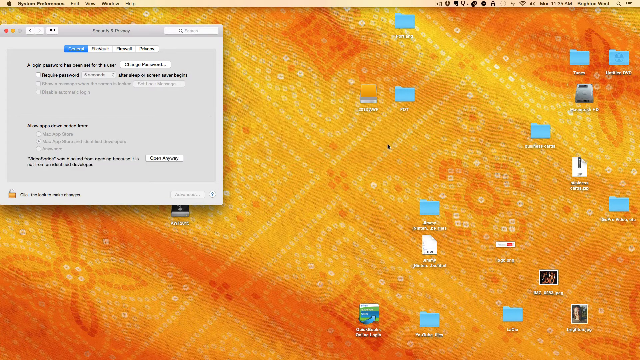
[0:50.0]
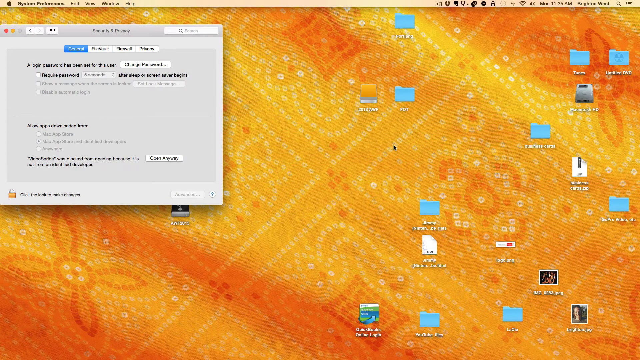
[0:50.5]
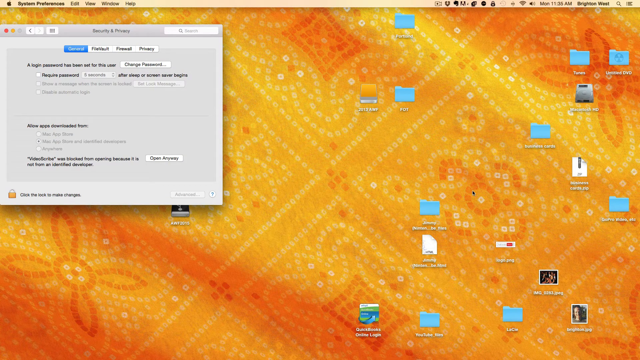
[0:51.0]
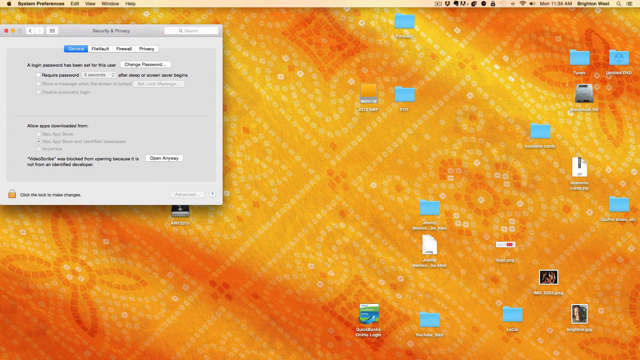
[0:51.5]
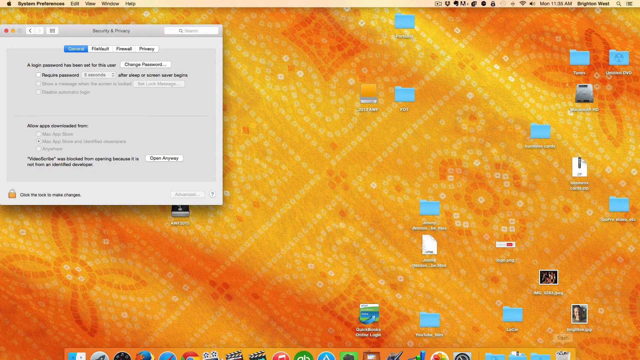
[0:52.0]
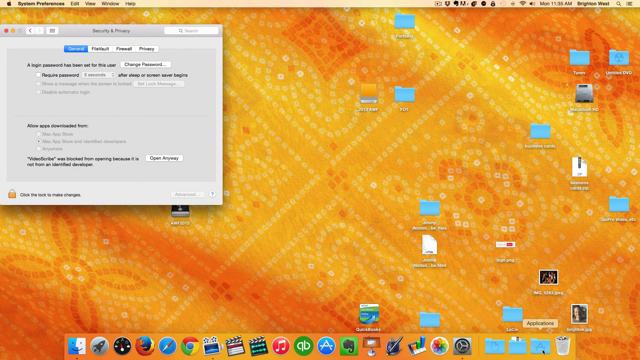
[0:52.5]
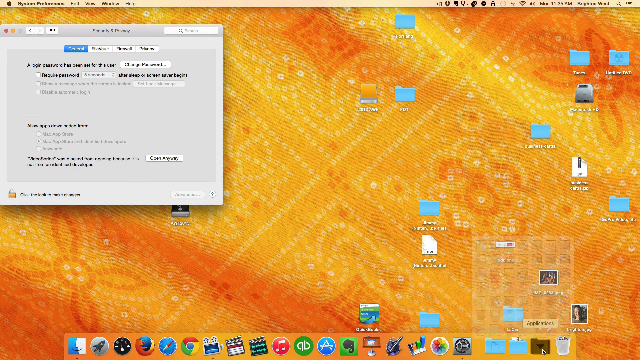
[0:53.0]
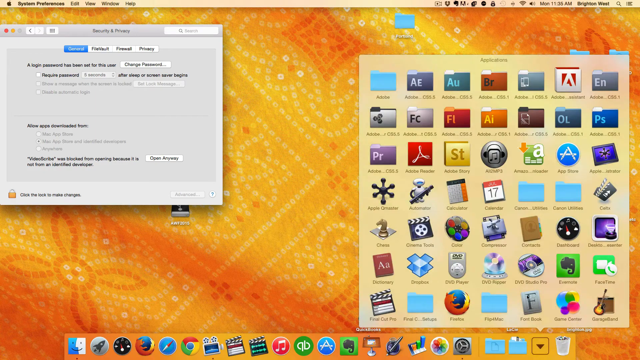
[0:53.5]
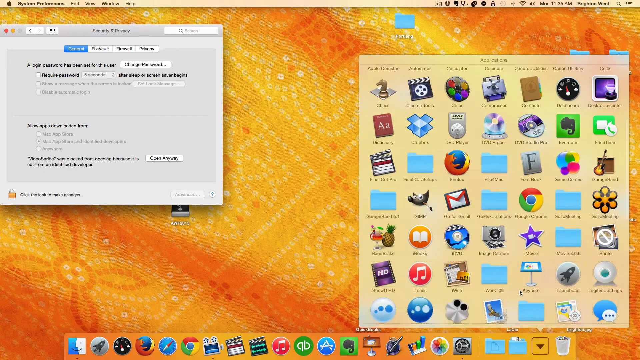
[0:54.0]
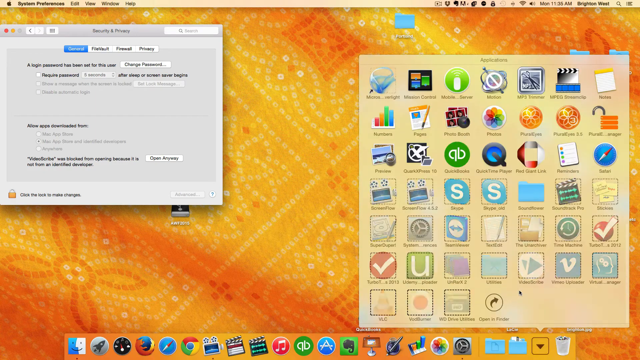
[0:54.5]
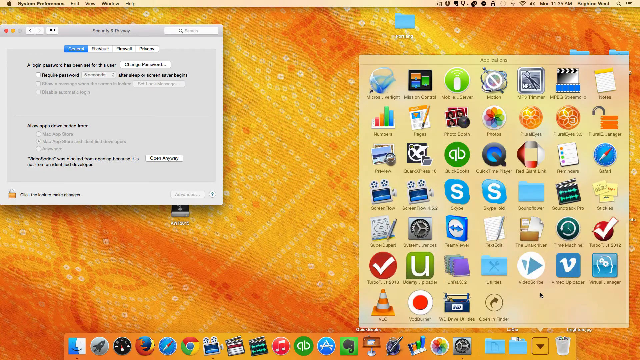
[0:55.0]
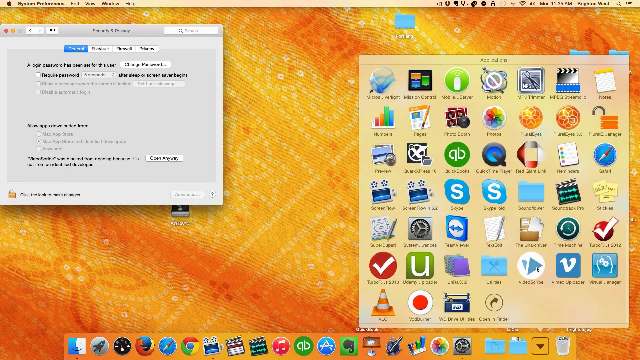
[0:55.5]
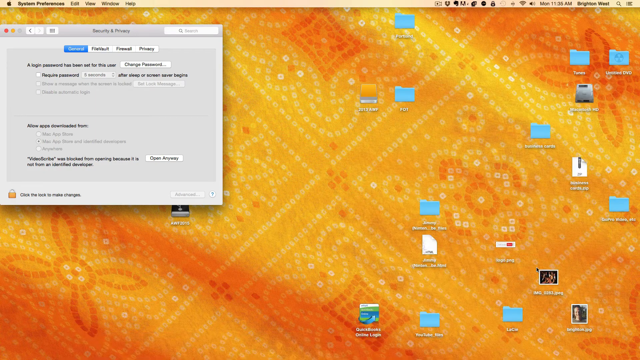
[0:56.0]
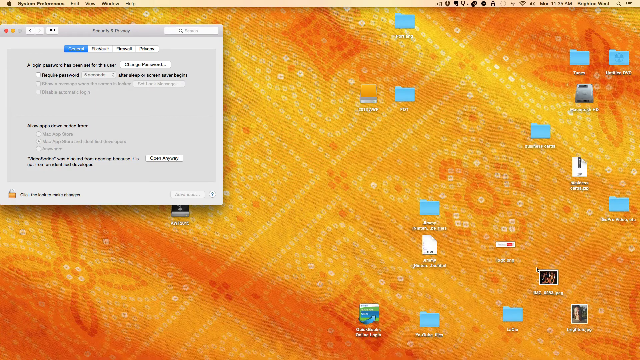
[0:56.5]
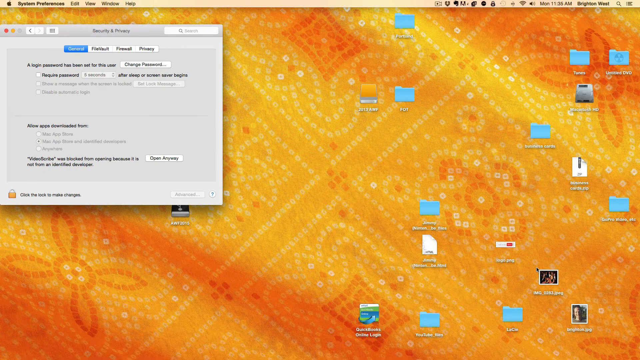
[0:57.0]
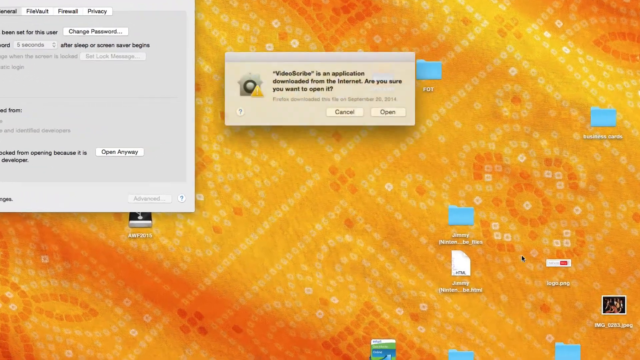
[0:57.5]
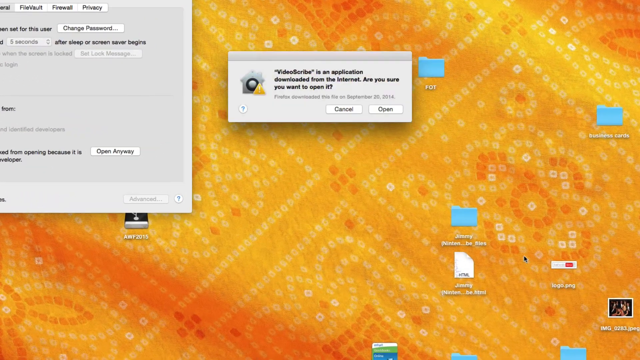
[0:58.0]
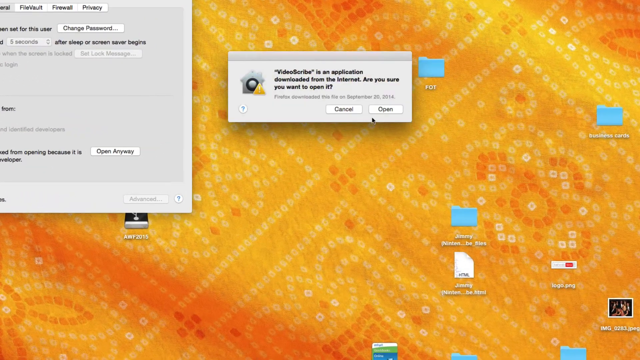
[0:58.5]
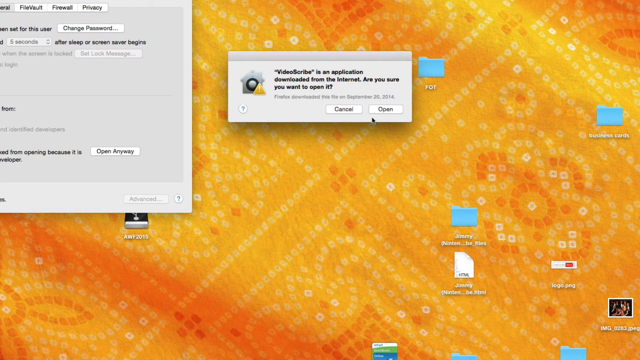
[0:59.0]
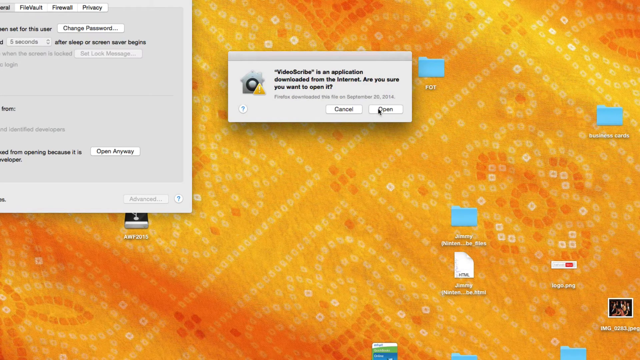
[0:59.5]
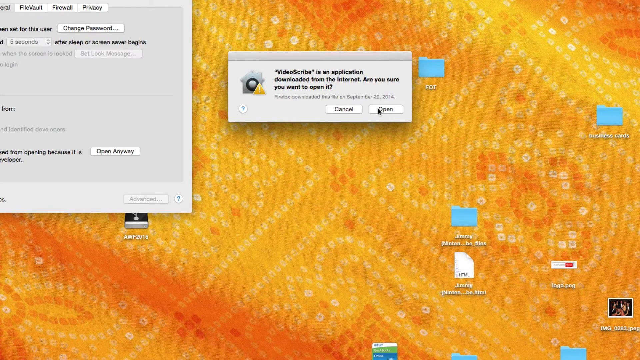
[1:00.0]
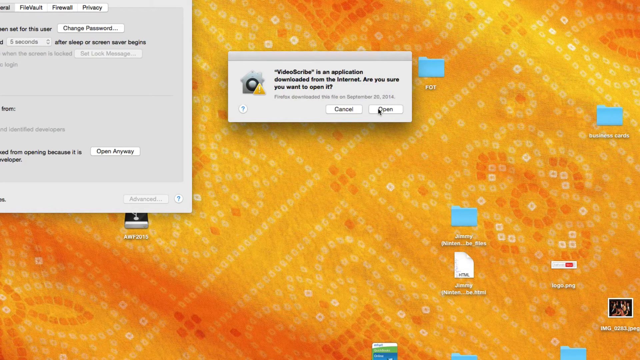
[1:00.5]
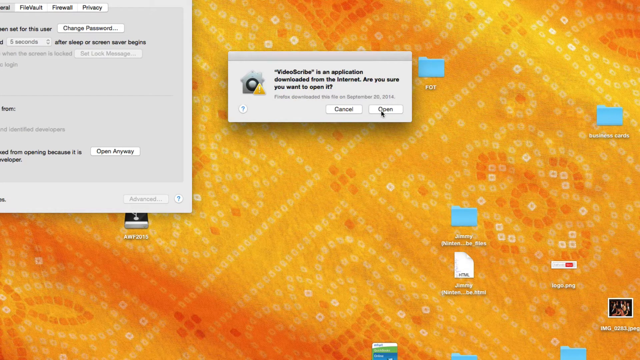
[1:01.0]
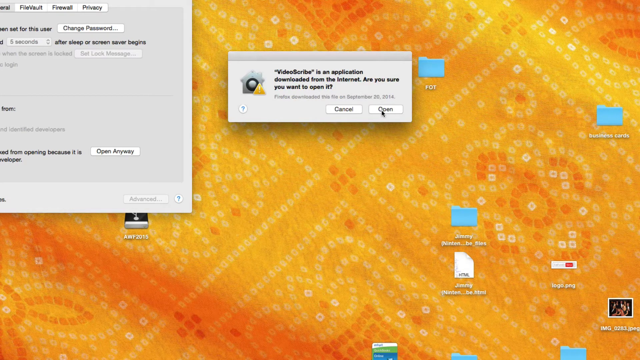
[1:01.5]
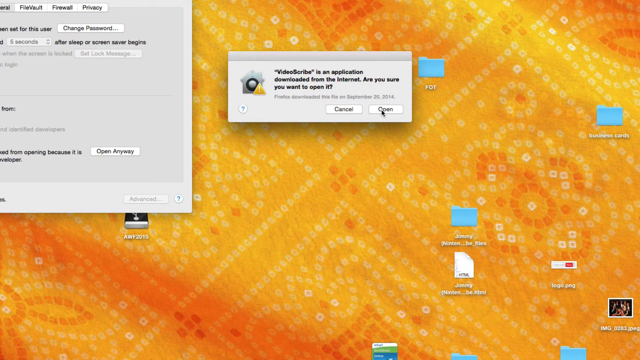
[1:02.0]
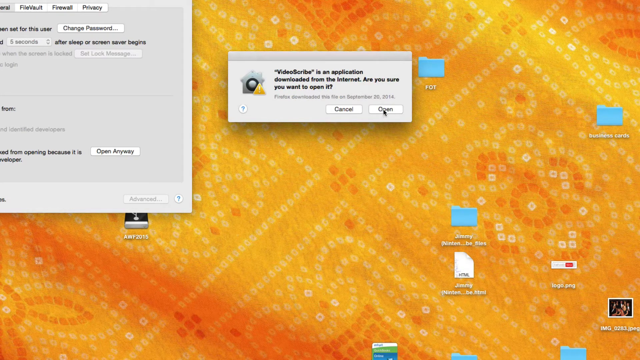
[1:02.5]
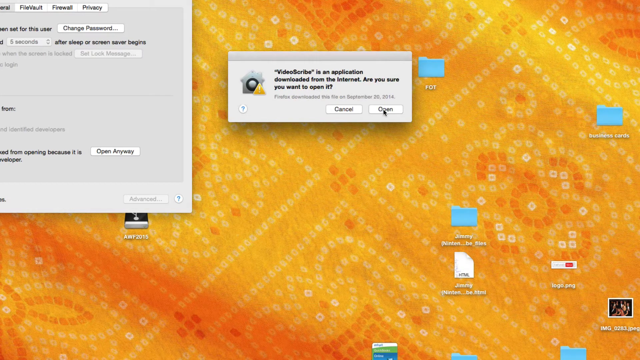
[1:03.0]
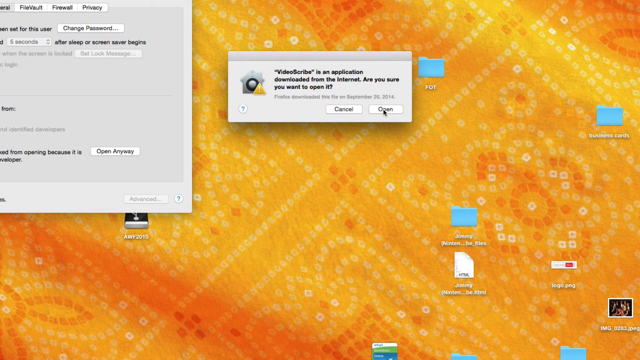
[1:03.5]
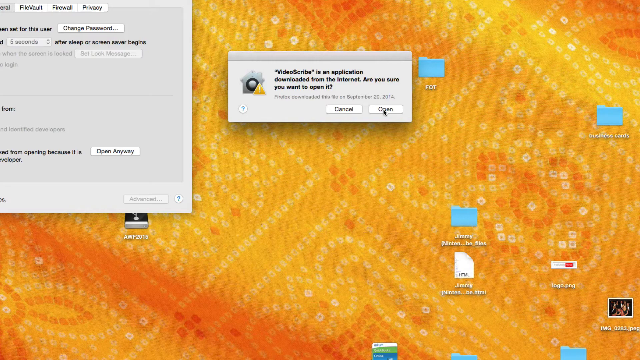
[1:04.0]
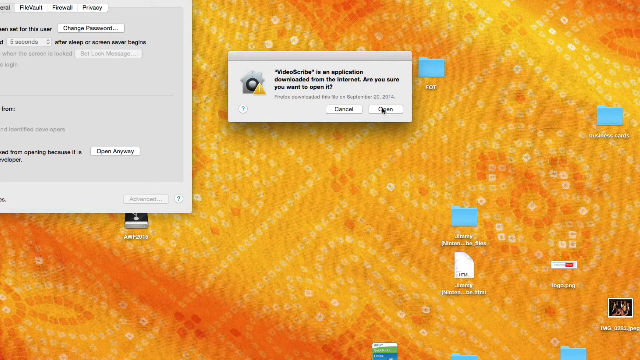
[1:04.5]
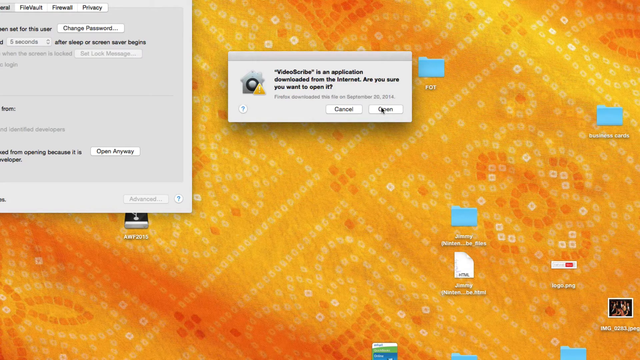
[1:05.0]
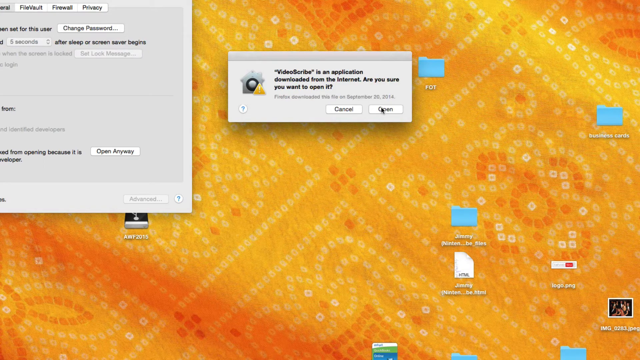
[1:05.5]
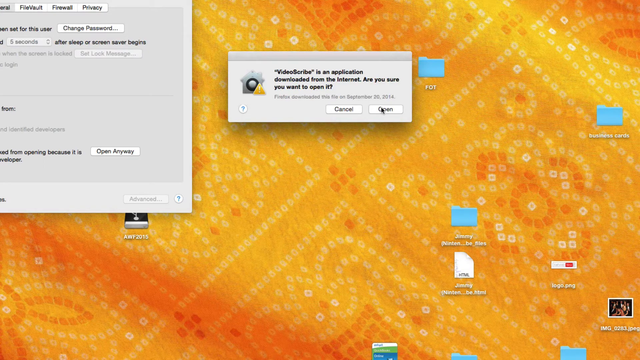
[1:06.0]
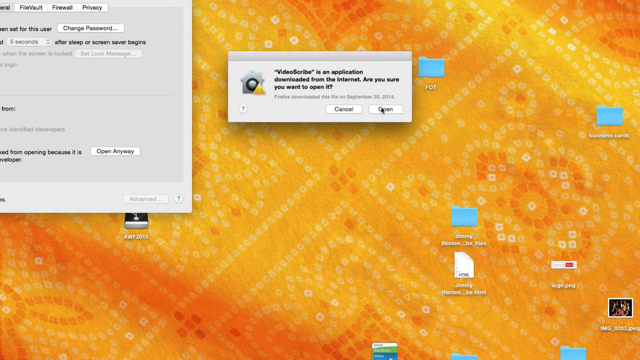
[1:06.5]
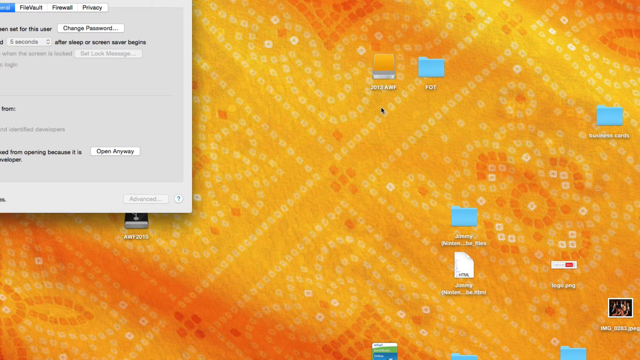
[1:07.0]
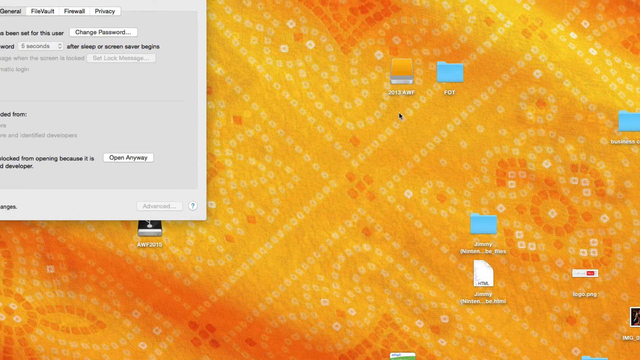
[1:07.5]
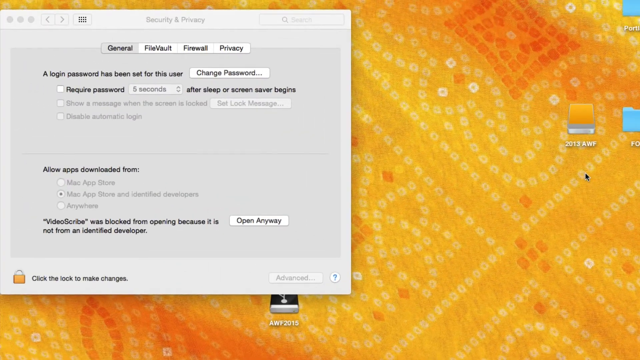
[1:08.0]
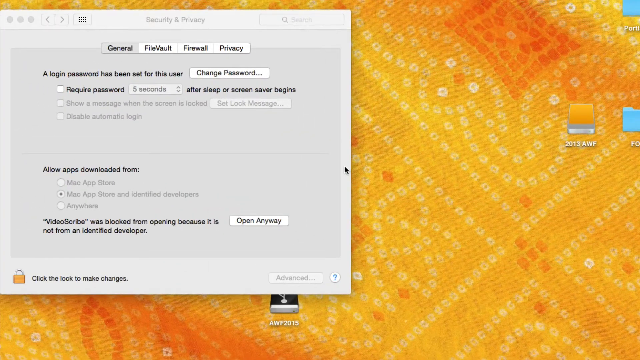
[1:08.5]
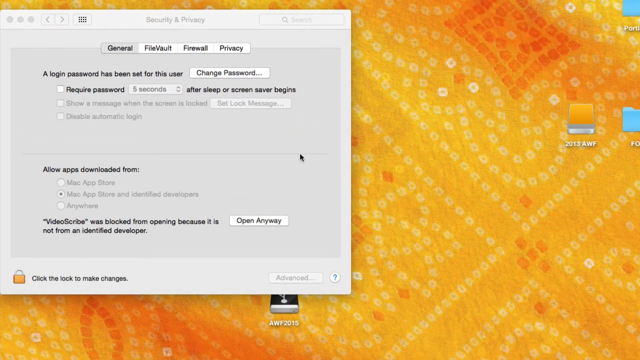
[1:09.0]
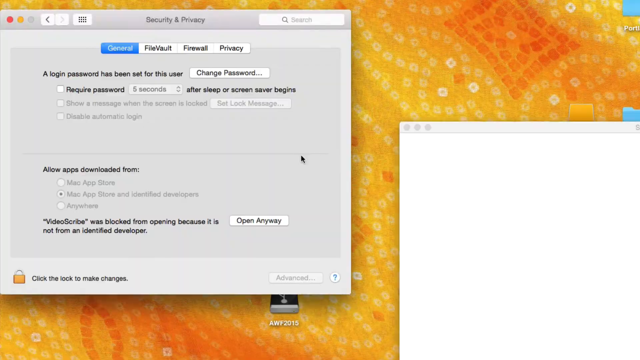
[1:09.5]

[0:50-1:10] A warning says "VideoScribe is an application downloaded from the internet. Are you sure you want to open it?" The user chooses to open it, giving permission for the application to be opened.